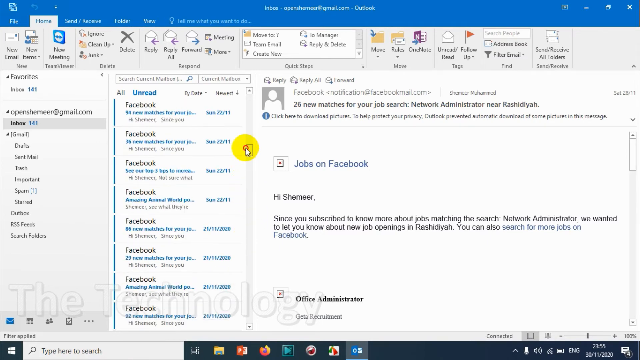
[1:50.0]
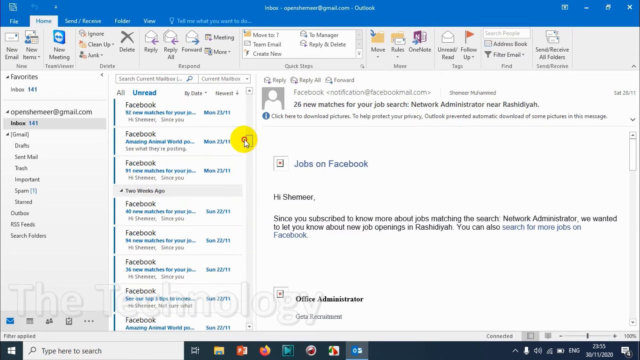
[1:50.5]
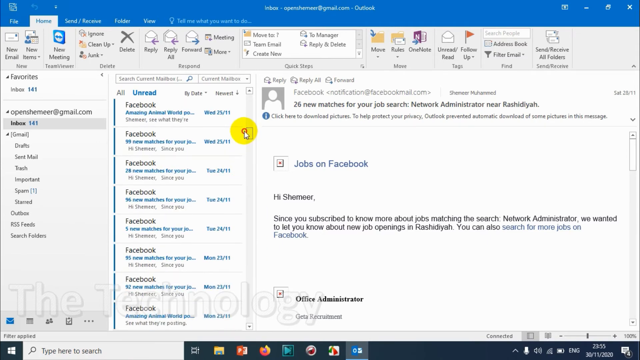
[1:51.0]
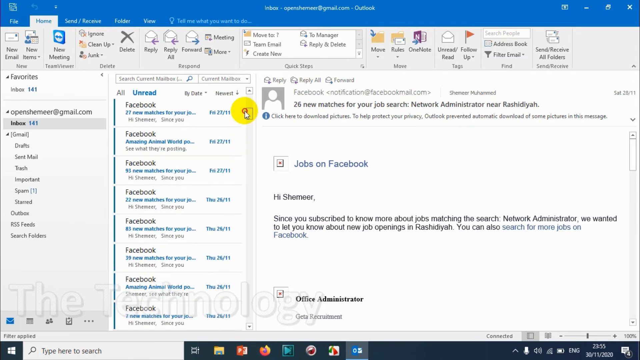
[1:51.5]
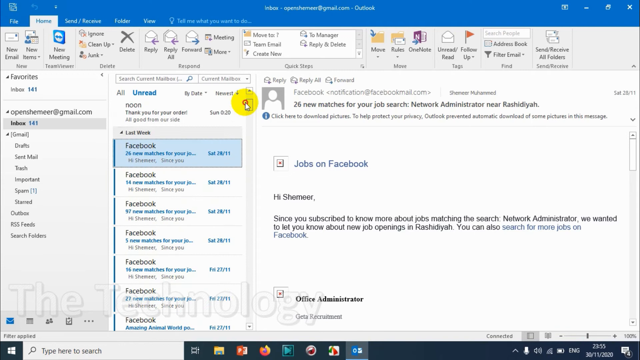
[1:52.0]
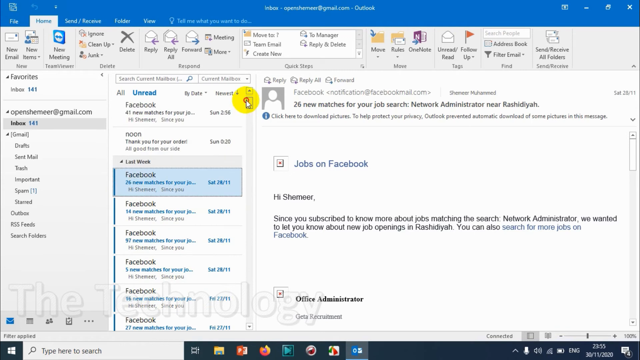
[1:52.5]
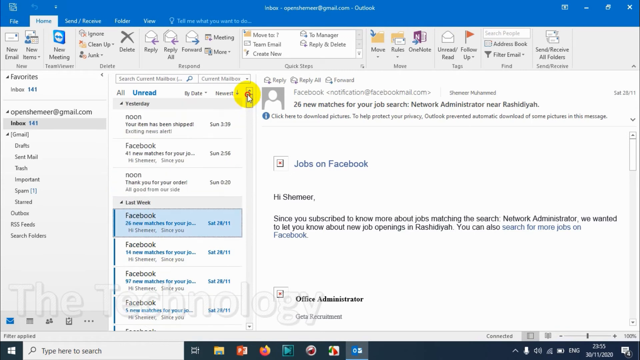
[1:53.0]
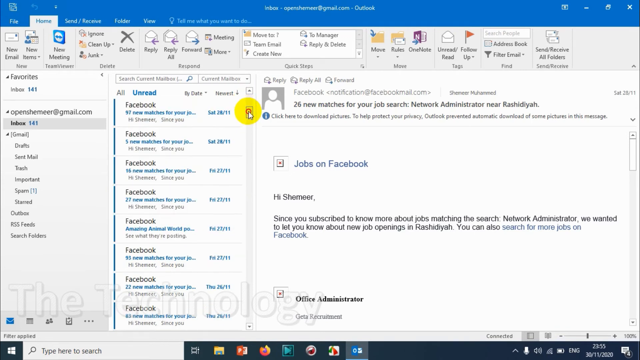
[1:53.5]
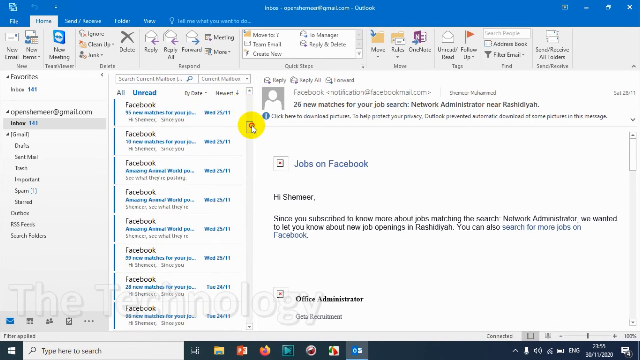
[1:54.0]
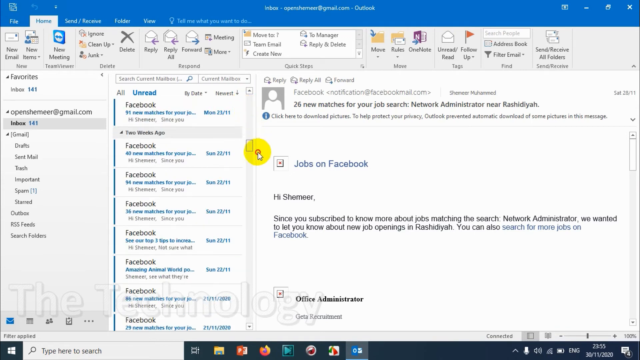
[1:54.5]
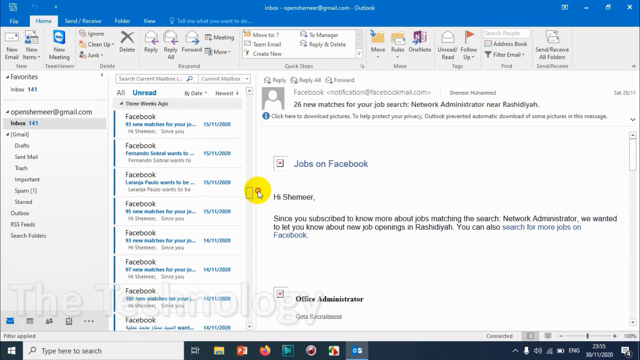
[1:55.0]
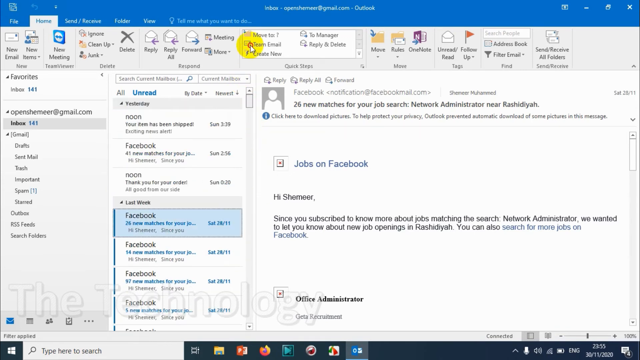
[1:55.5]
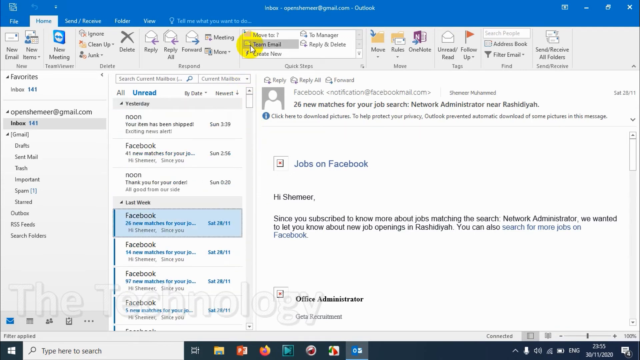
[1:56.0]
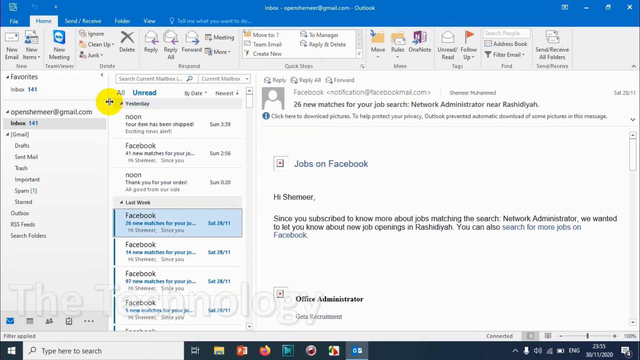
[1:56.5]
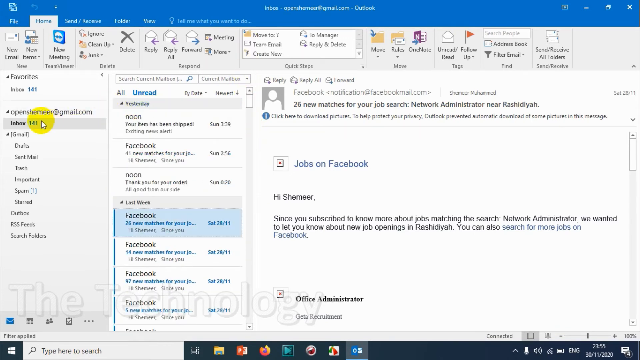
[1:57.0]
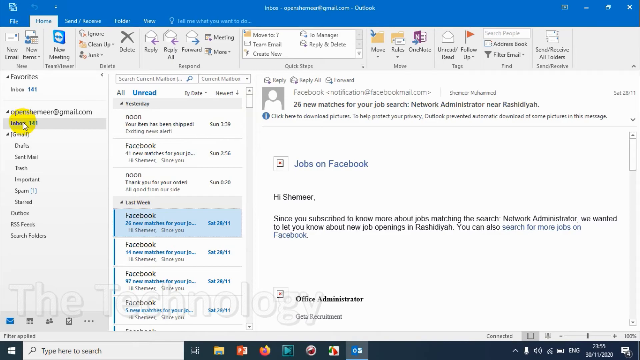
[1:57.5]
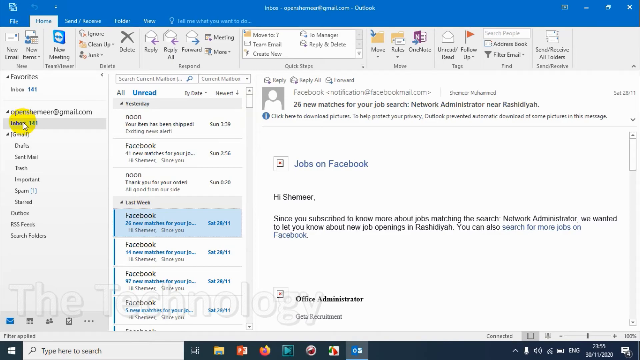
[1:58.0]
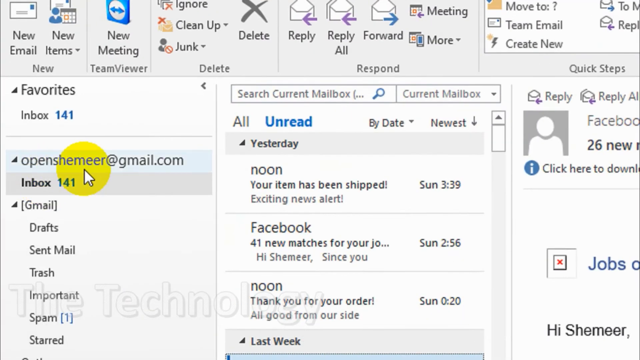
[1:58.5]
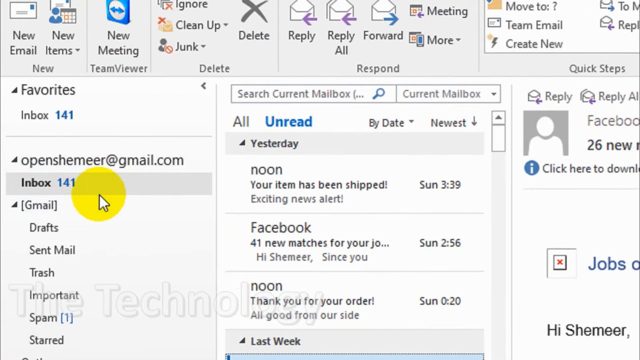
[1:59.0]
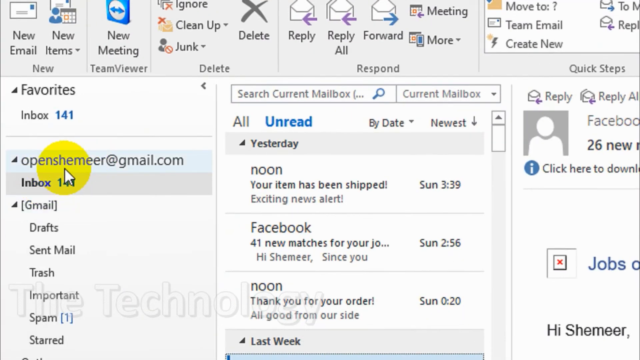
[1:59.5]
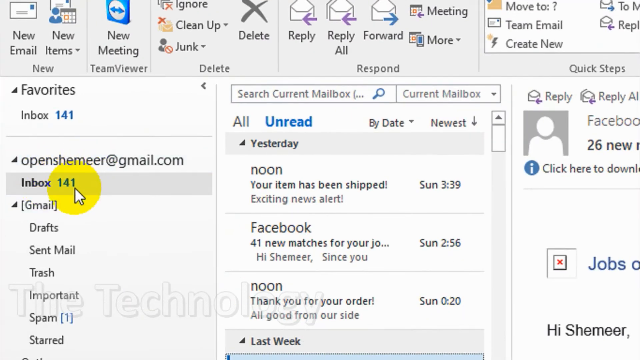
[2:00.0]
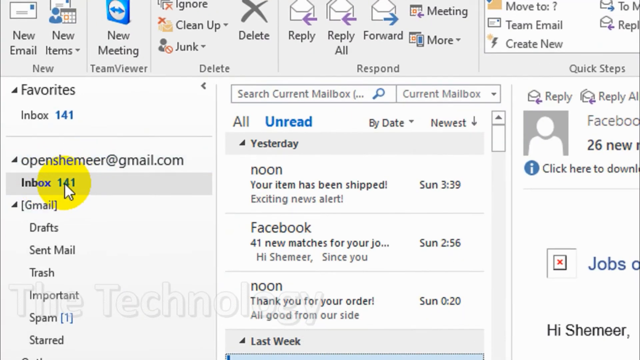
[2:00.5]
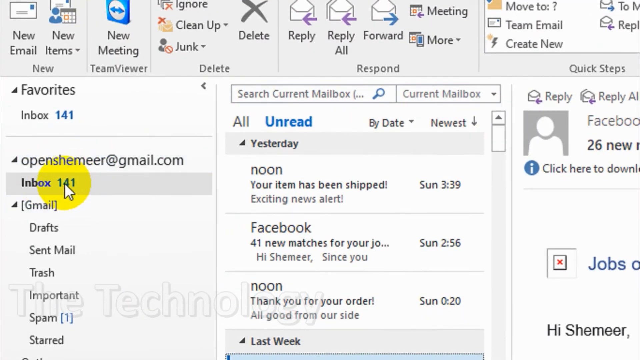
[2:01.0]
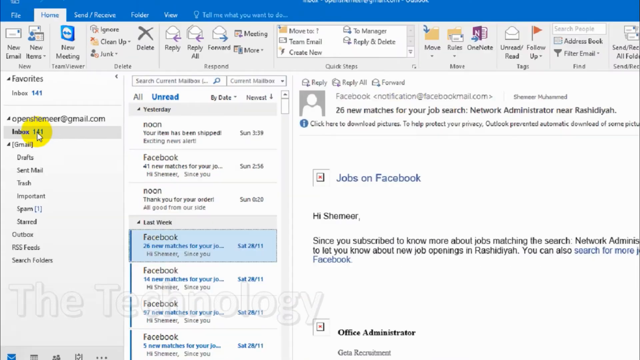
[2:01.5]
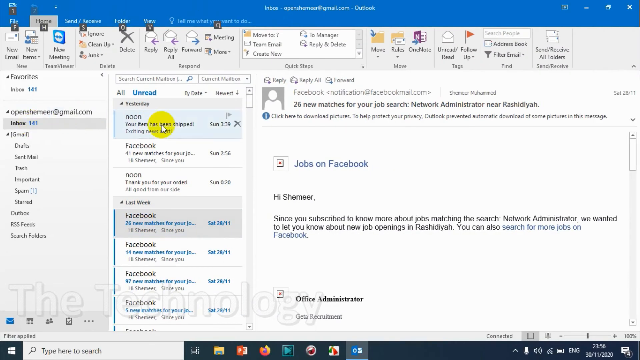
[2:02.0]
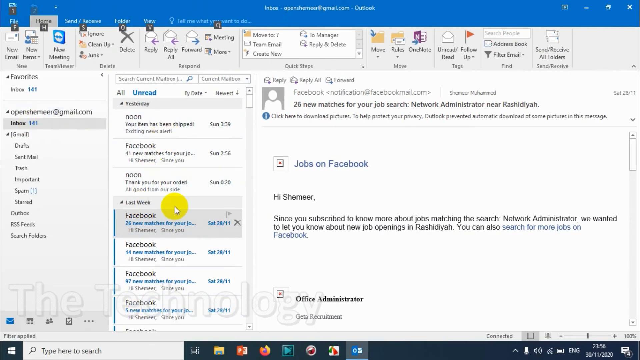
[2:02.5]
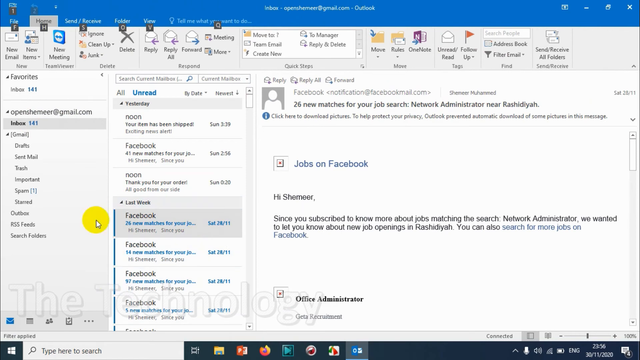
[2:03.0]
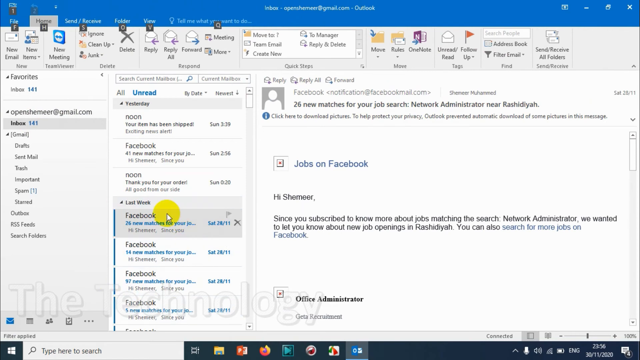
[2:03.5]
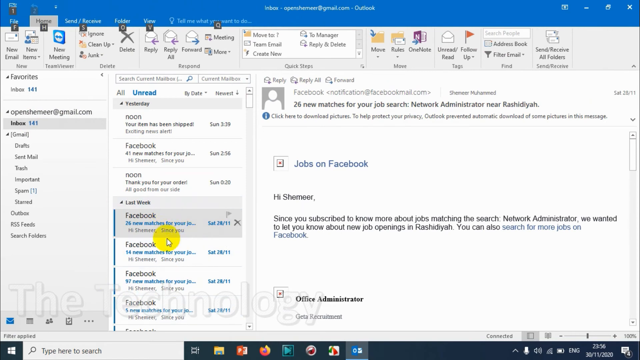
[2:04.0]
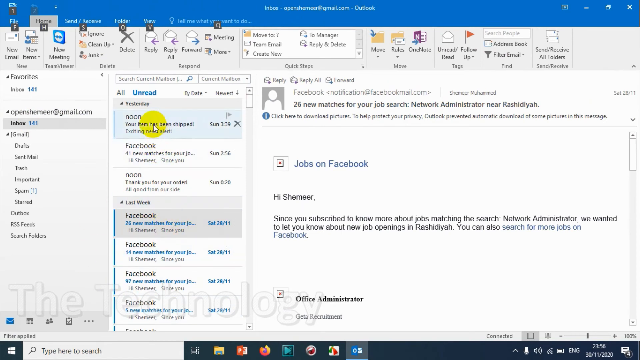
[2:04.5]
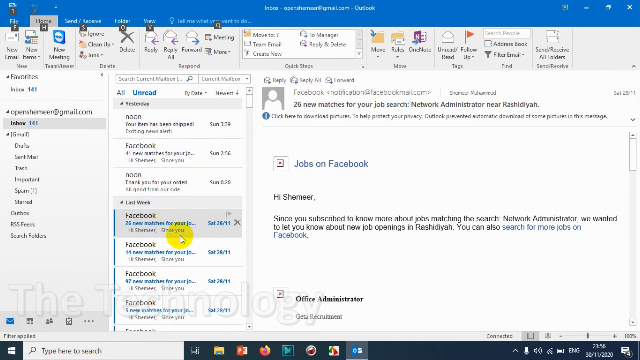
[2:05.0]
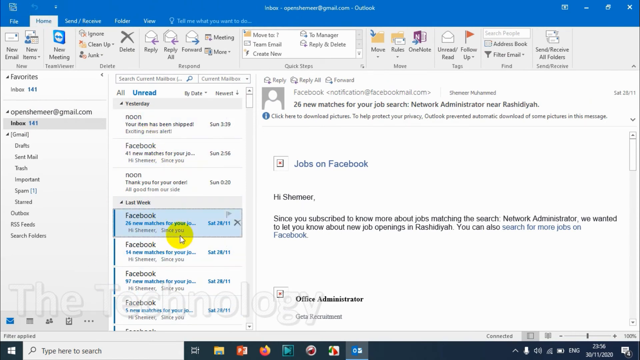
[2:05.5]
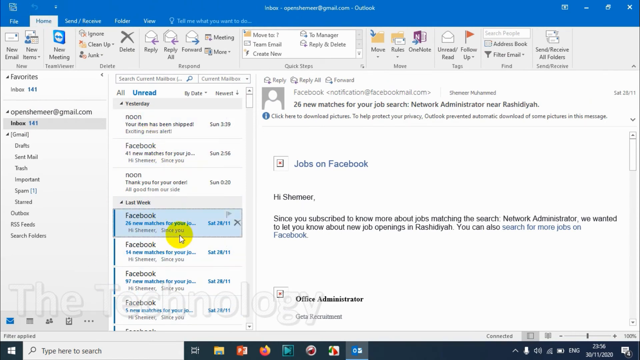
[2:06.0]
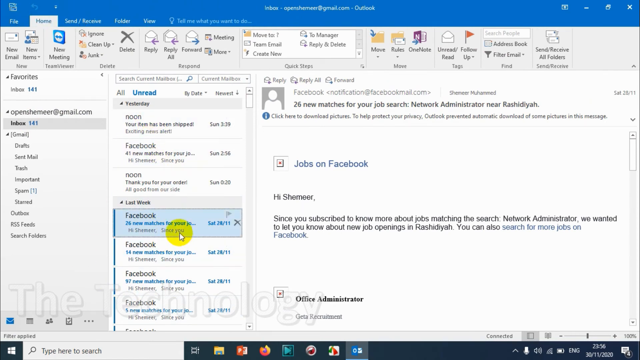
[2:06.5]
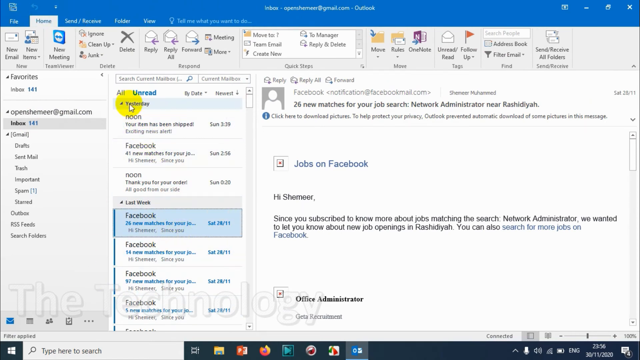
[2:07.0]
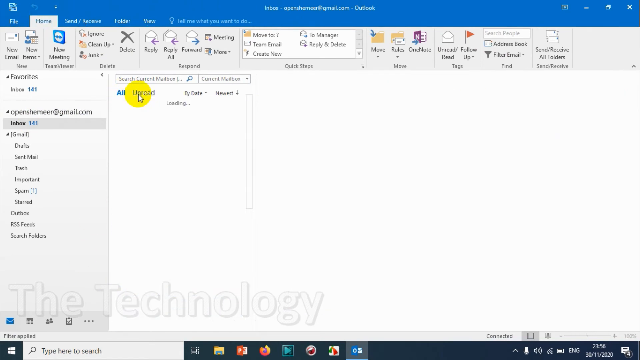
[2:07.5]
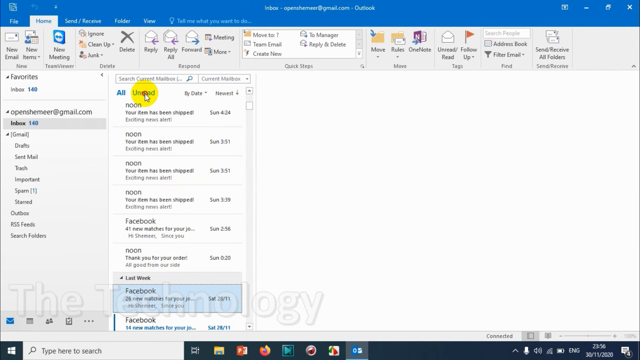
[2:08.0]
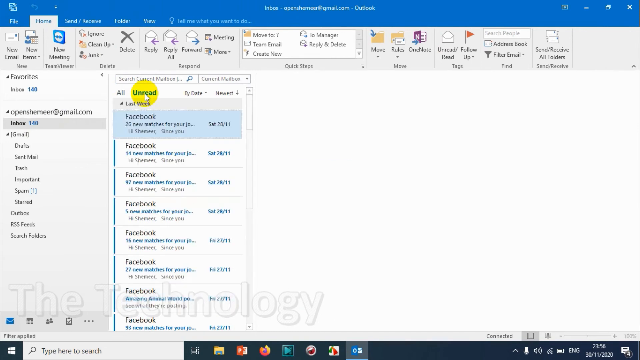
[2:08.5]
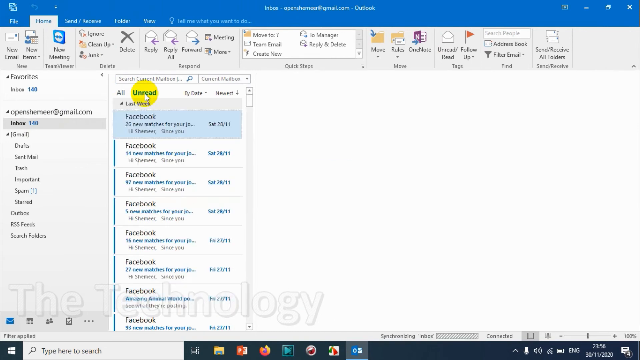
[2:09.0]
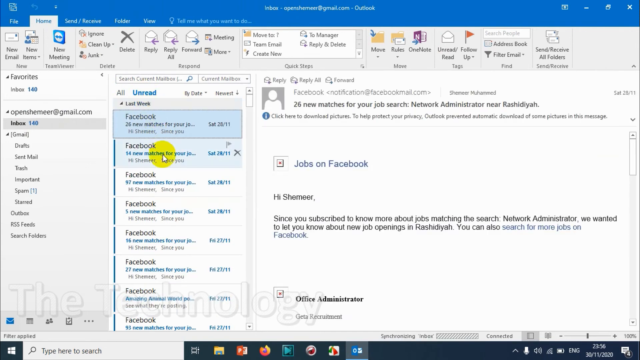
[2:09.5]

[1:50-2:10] A computer screen shows an Outlook account with a column of email categories on the left, unread messages in the center, and on the right a preview of the message highlighted last. A blue strip at the top marks the application, and the Home category at the top is selected. A yellow mouse pointer goes up and scrolls up through the unread emails in the middle, then moves left to the categories and lands on the inbox. It circles around in the email area, taps on unread, scrolls through the emails a little more, then moves to the right and stays there. The page ends looking very similar to how it began, a landing page for someone's Outlook email.